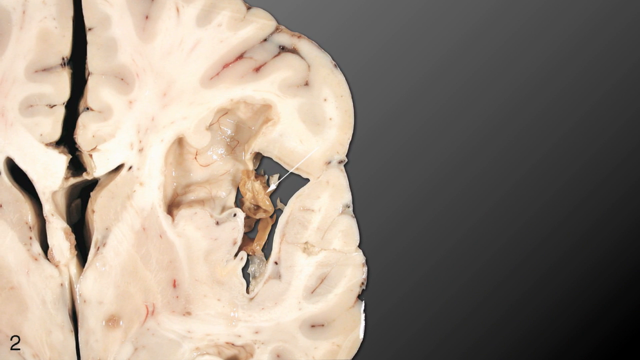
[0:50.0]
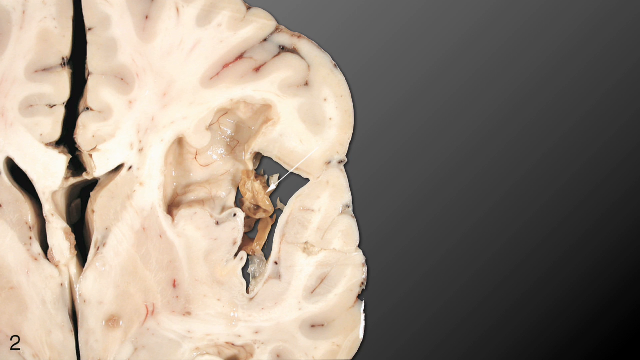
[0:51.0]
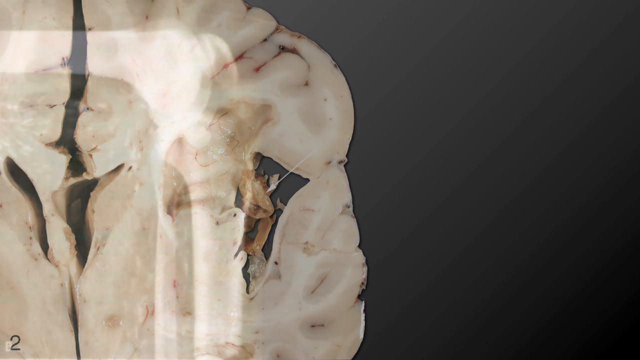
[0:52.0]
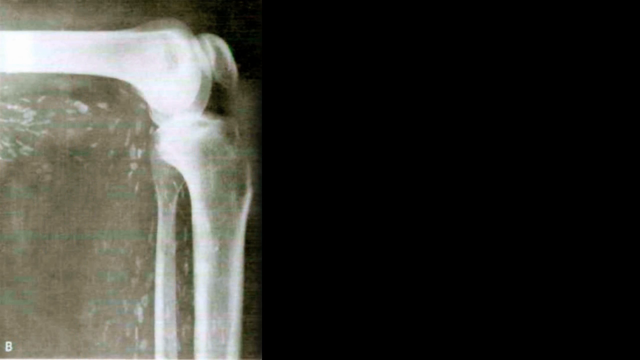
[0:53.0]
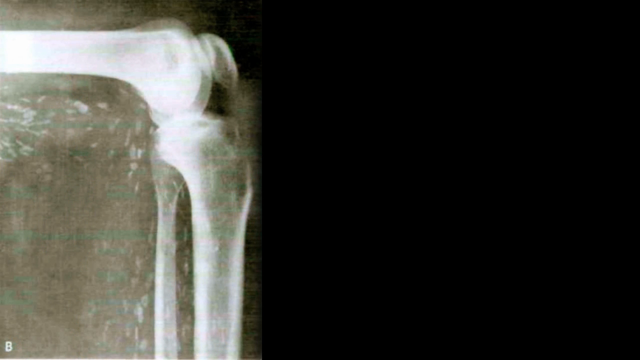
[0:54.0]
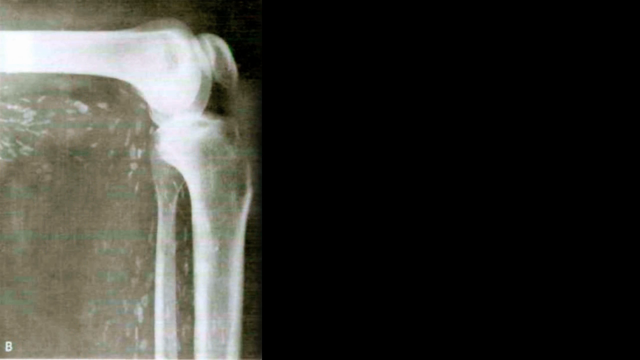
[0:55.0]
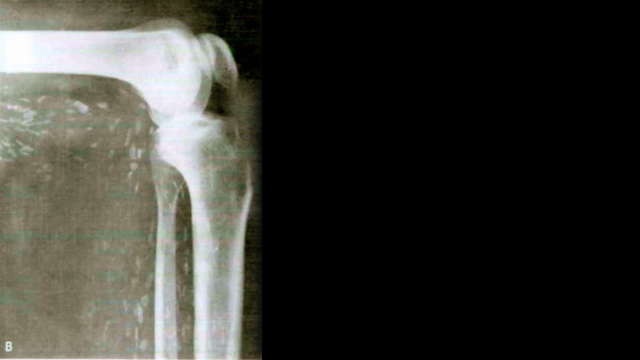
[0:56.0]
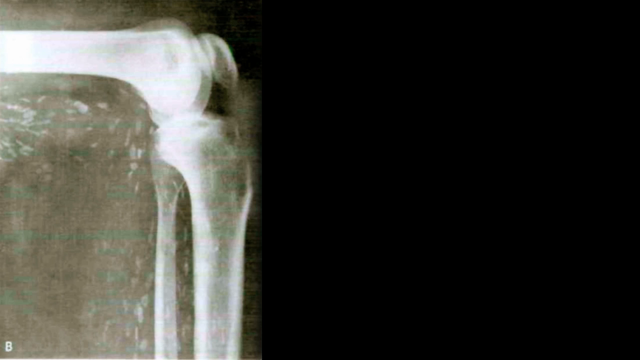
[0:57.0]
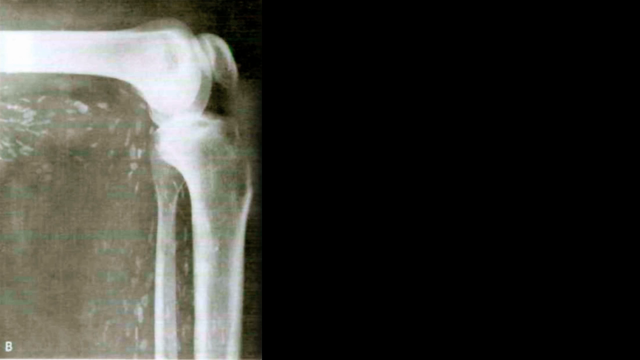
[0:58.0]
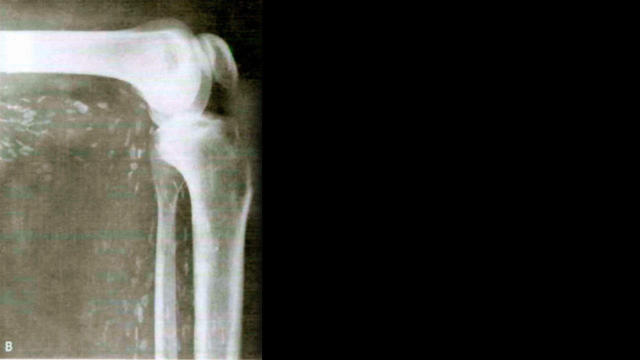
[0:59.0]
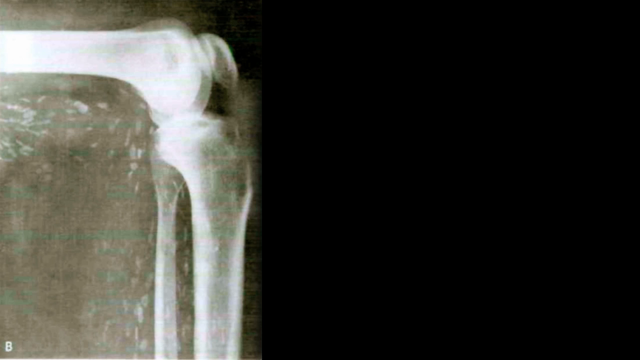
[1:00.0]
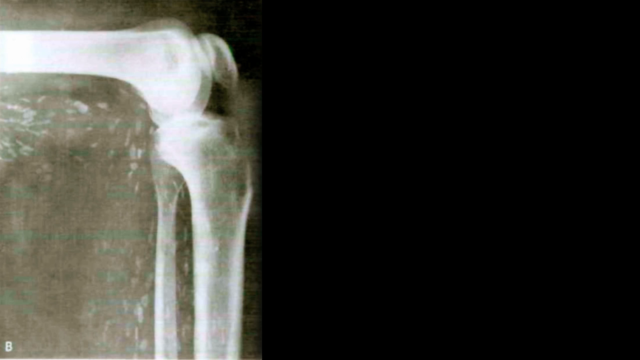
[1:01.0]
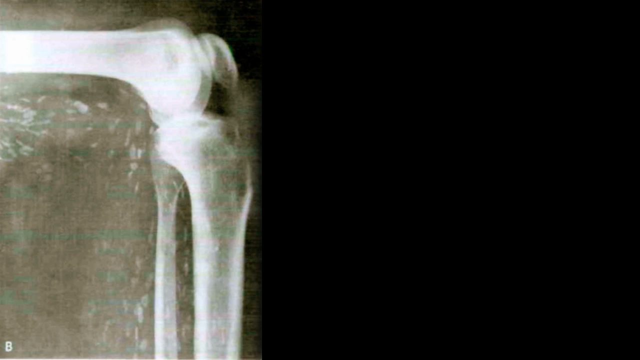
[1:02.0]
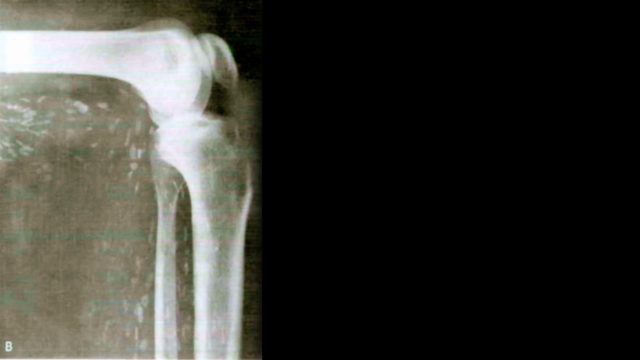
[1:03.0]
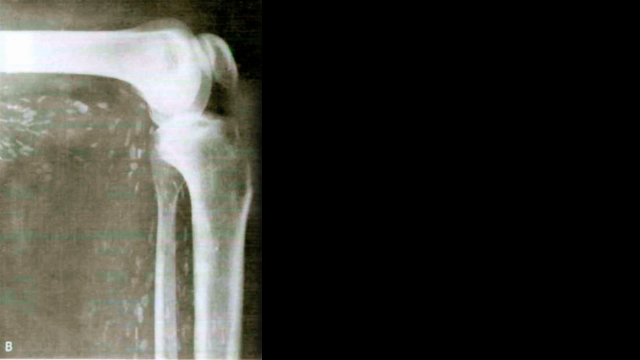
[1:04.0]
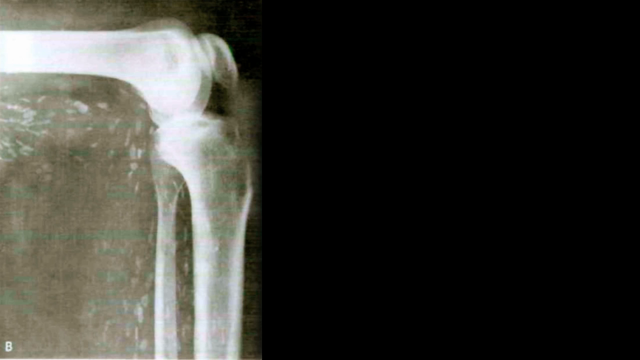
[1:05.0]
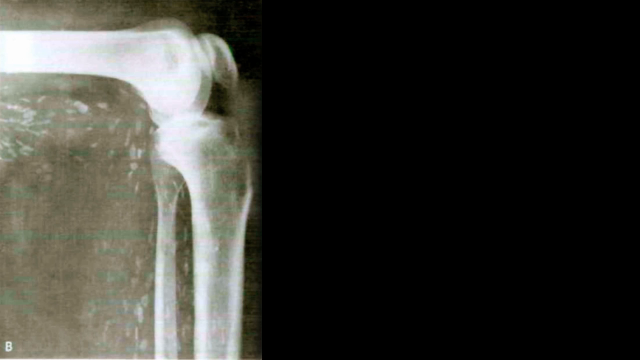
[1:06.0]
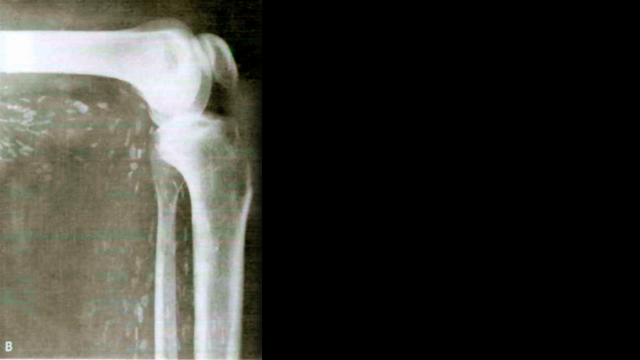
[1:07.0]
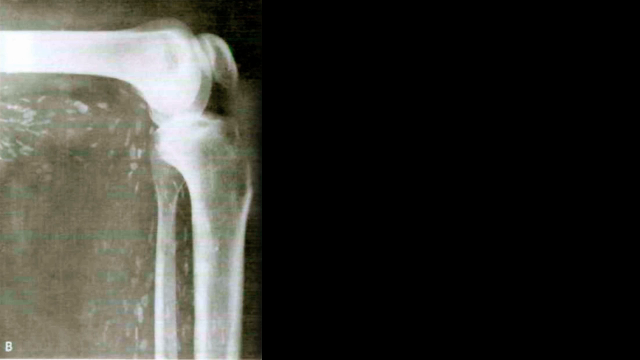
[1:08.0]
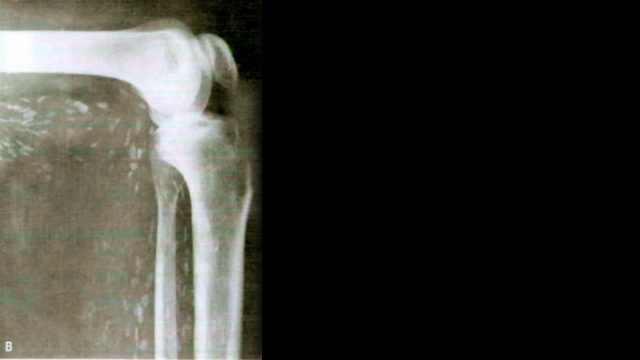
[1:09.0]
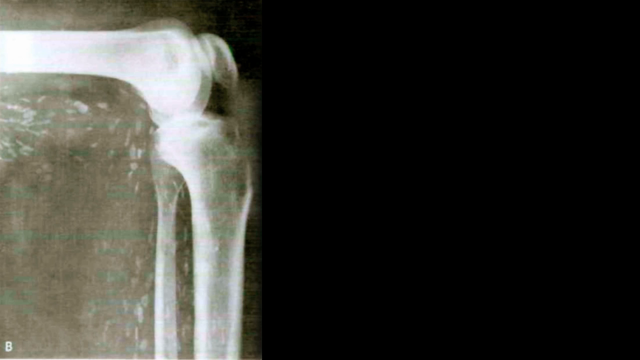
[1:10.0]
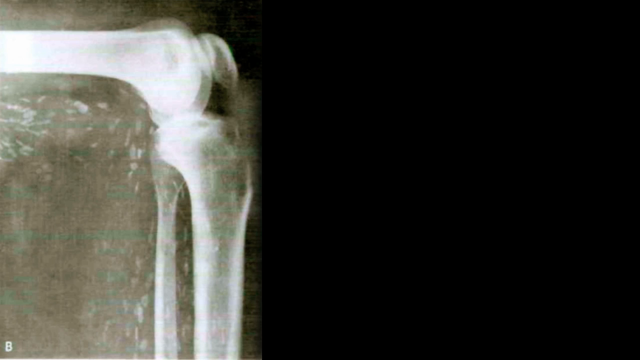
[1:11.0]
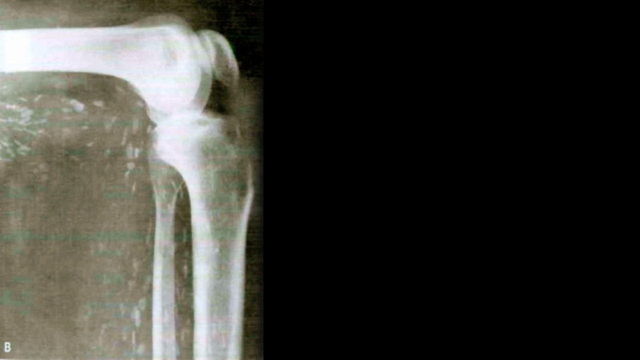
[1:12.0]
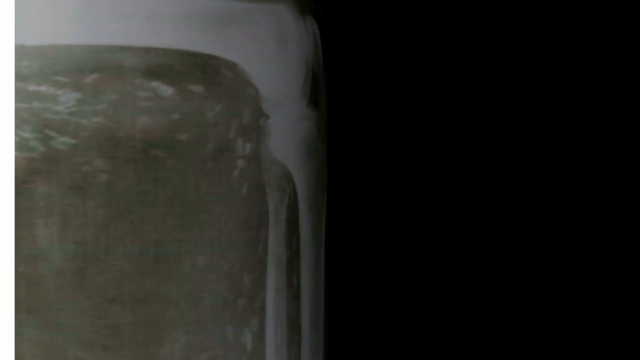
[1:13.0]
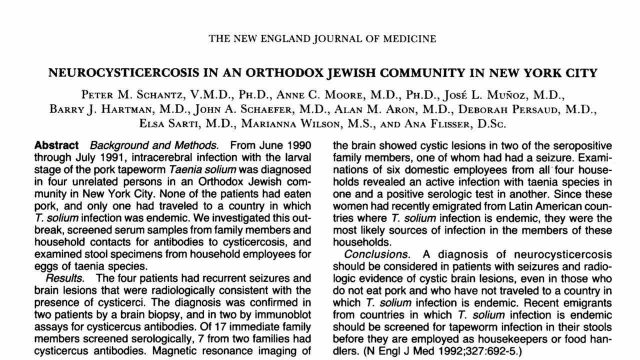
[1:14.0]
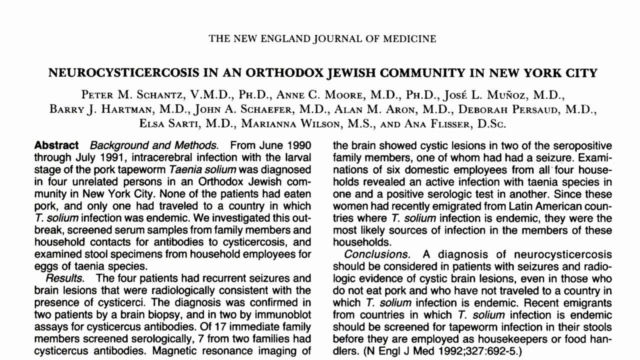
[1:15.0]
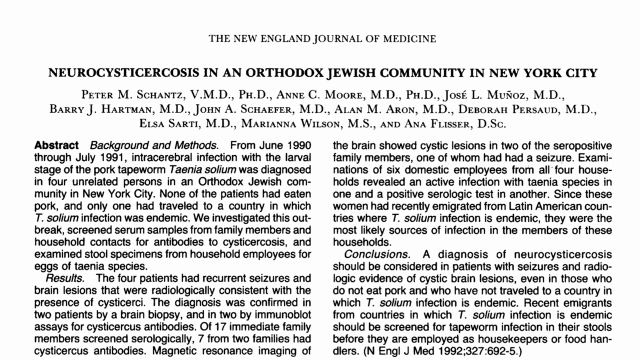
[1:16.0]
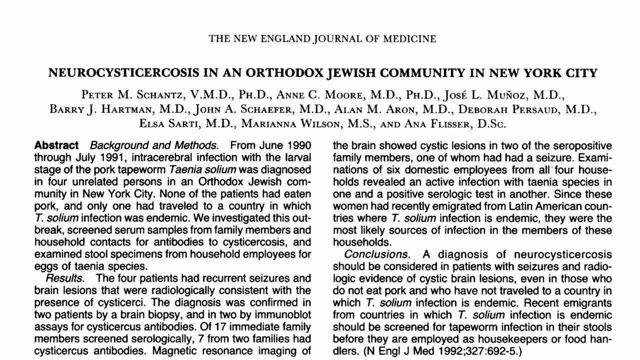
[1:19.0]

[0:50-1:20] A diseased piece of body tissue appears; it looks like a fatty area where some of the tissue is rotten. Next comes an x-ray of a bone joint that appears to be damaged. Then an article from the New England Journal of Medicine about neurocysticerosis in an Orthodox Jewish community in New York City is shown. It has multiple authors and reports that in 1990 and 1991 four people in the Orthodox Jewish community in New York were found to have the disease, only one of whom had been to a country where it is endemic. All of the patients had seizures and brain lesions. The infection is believed to have been caused by servants working in the households of these four people; the servants were examined and showed they had been exposed to active infection in the past, and all came from Hispanic countries. The advice is that immigrants from such countries should be screened for tapeworm, particularly if they are going to work in other people's households.